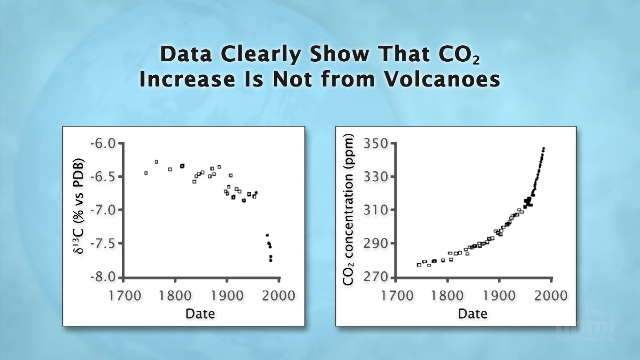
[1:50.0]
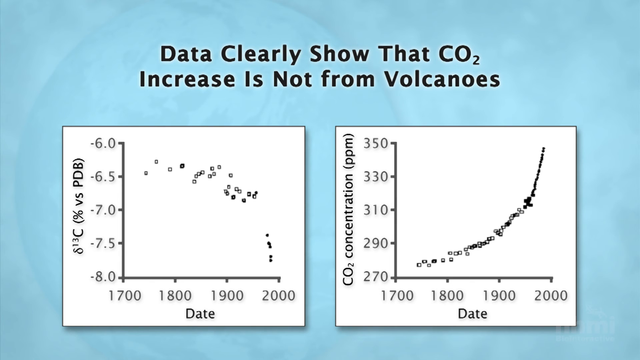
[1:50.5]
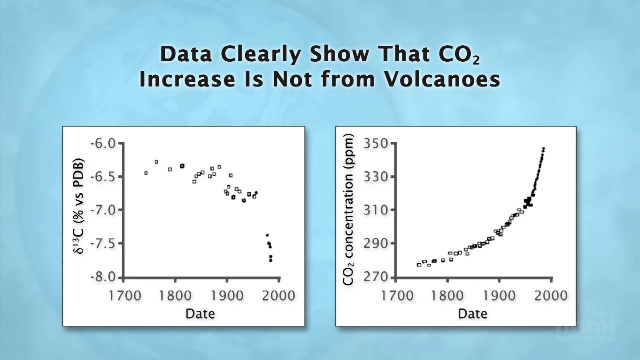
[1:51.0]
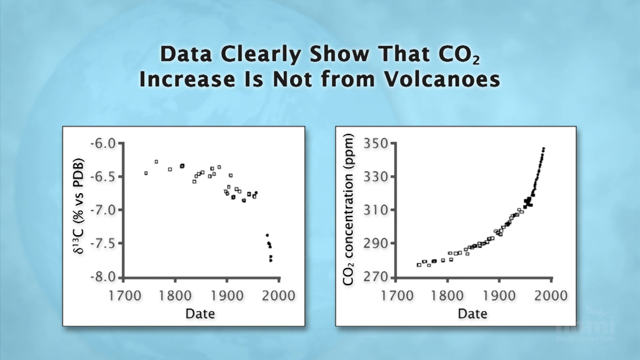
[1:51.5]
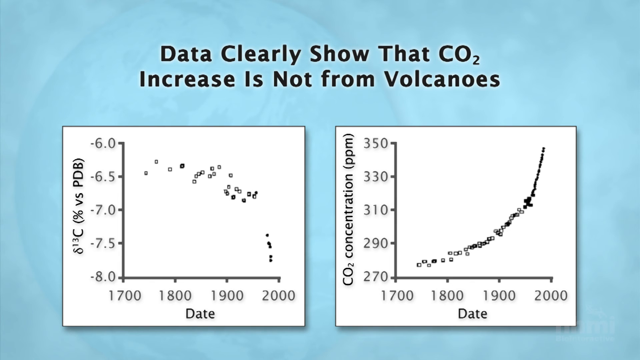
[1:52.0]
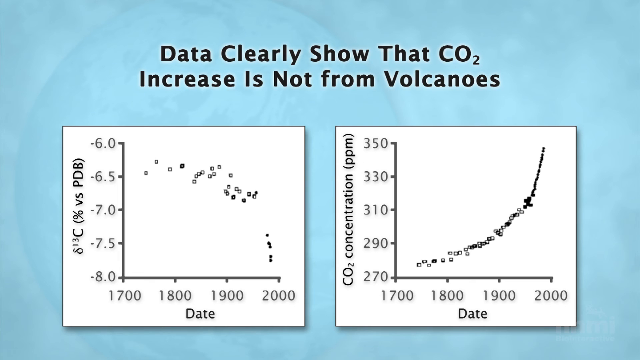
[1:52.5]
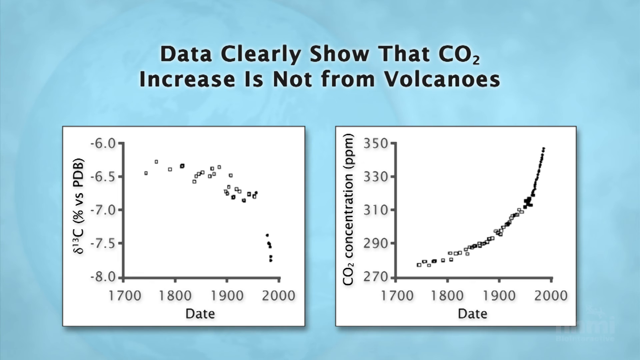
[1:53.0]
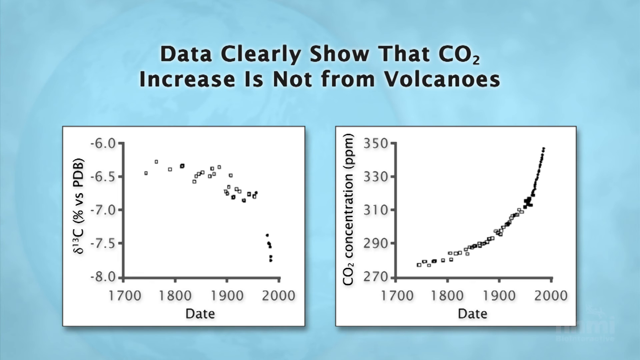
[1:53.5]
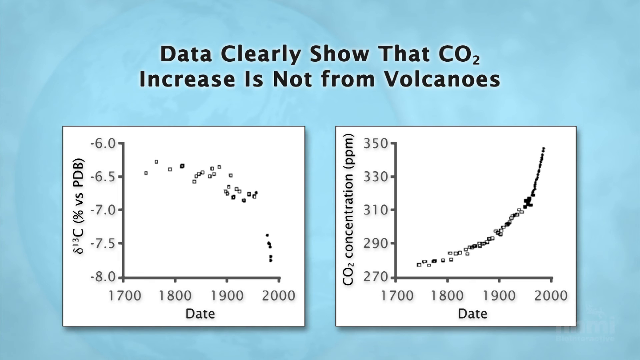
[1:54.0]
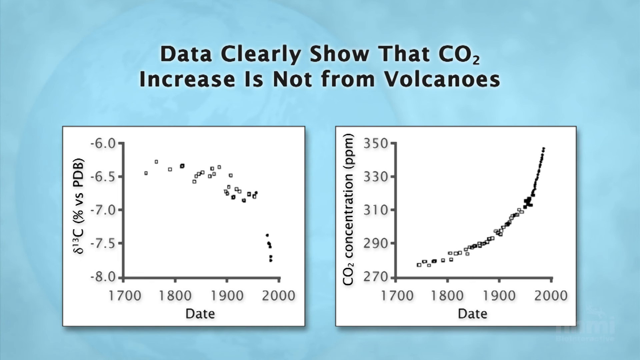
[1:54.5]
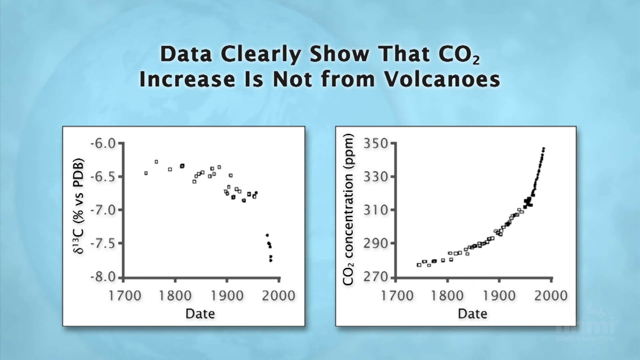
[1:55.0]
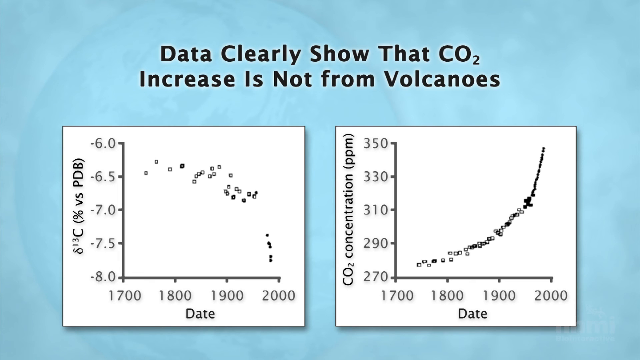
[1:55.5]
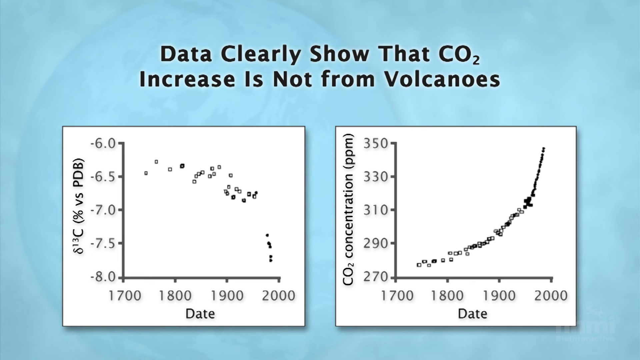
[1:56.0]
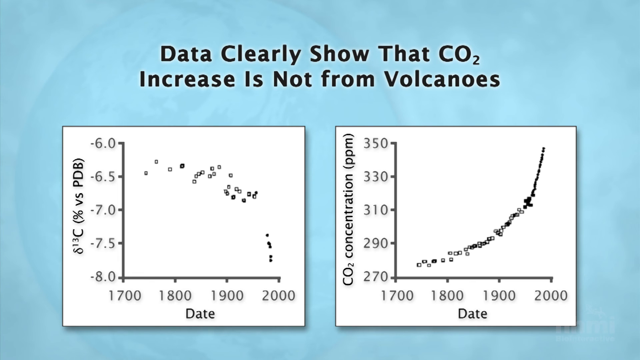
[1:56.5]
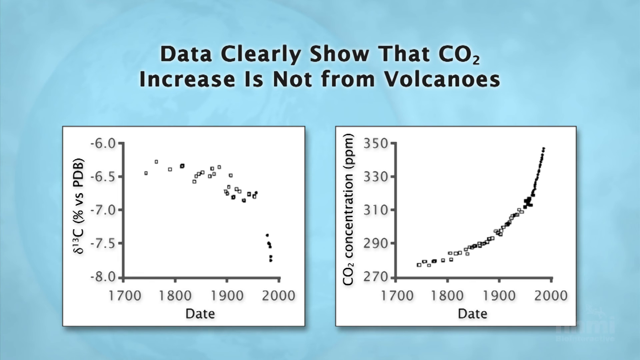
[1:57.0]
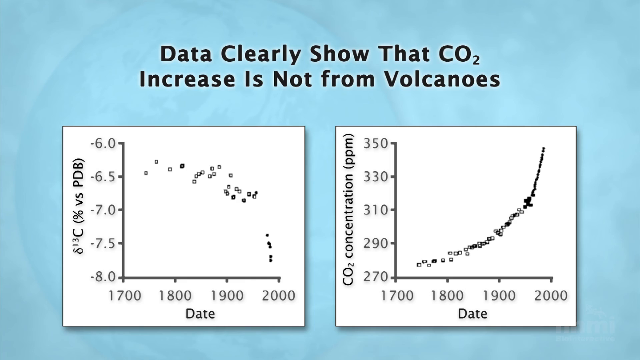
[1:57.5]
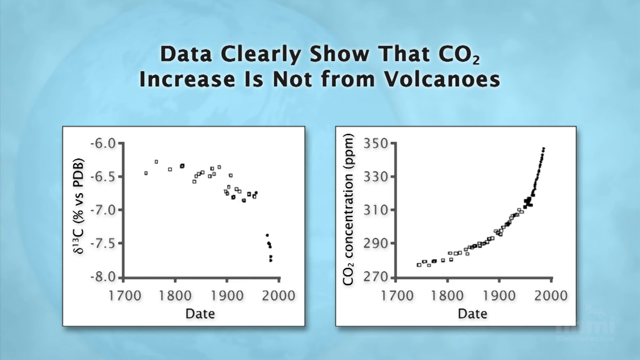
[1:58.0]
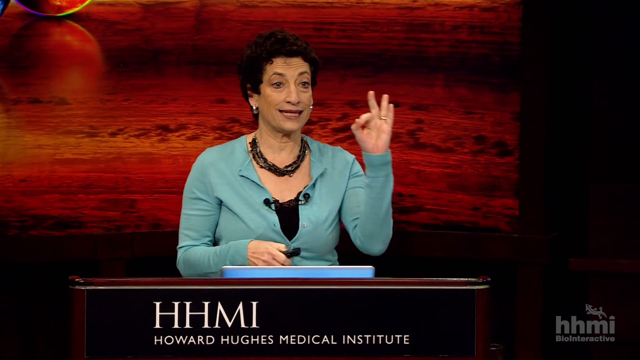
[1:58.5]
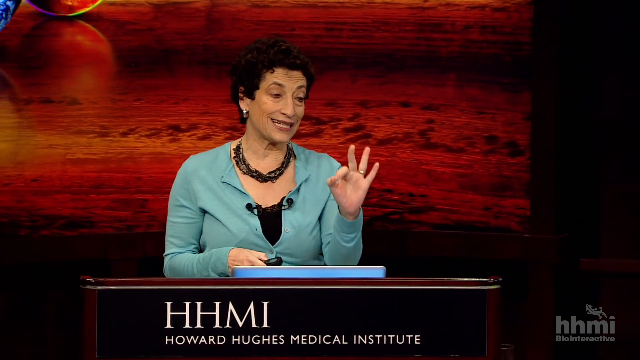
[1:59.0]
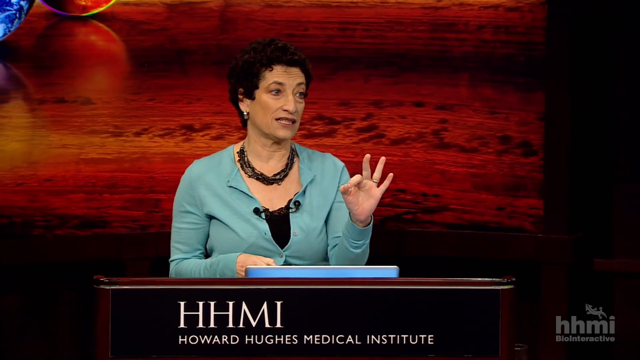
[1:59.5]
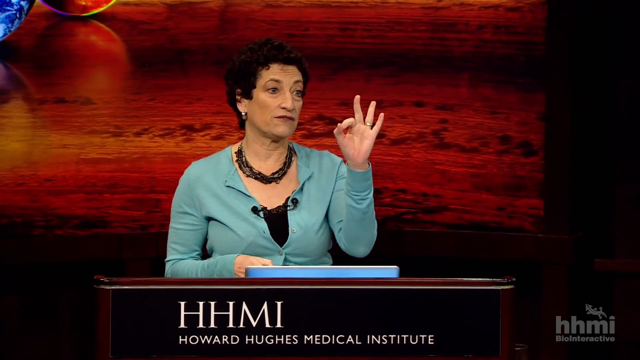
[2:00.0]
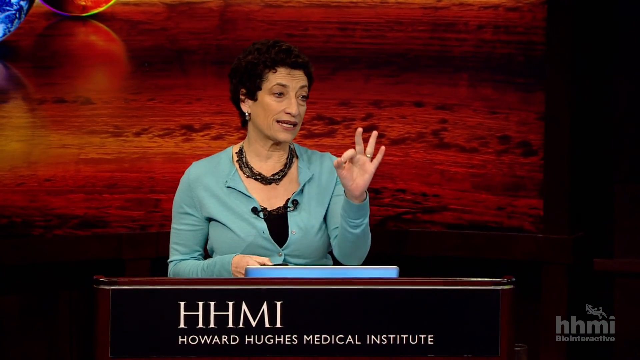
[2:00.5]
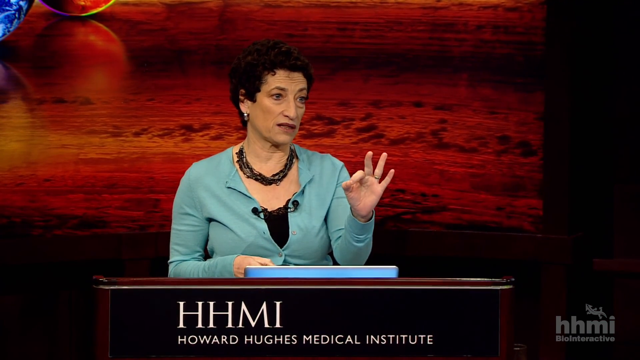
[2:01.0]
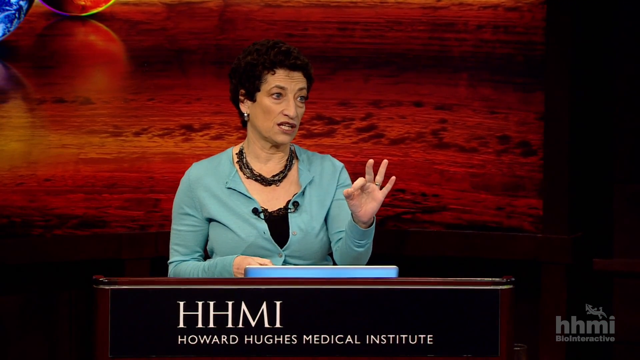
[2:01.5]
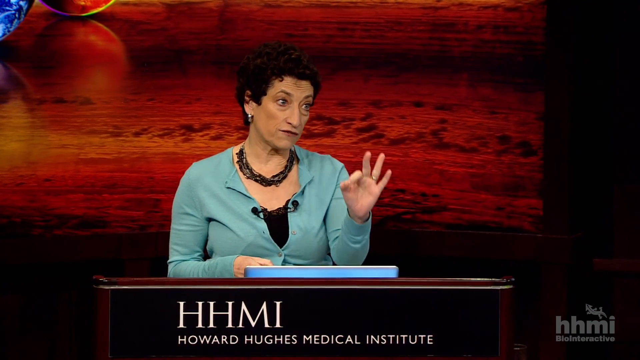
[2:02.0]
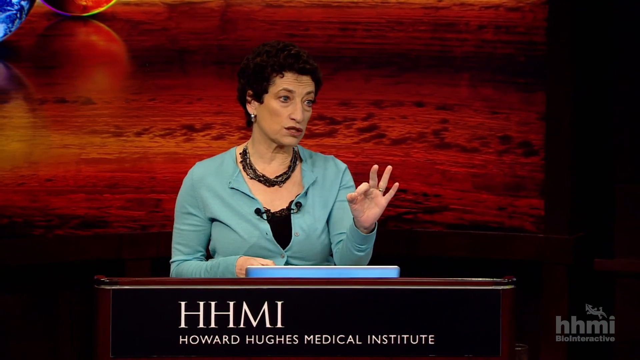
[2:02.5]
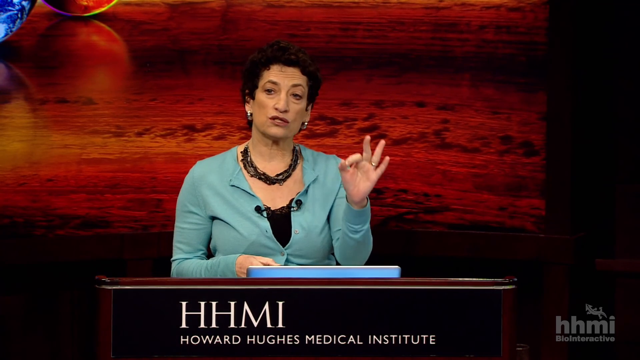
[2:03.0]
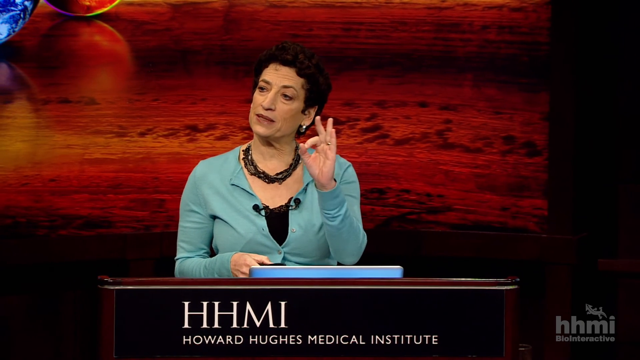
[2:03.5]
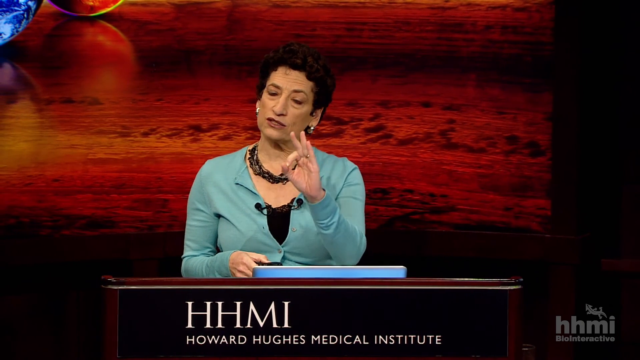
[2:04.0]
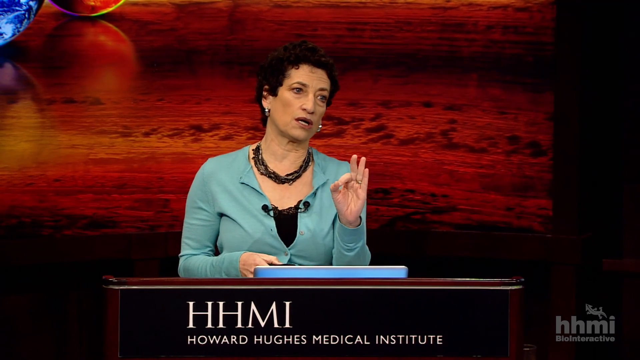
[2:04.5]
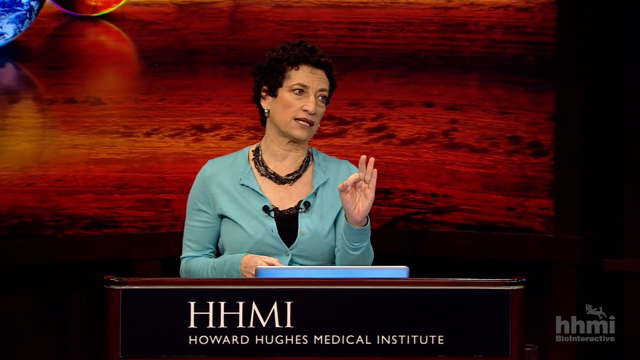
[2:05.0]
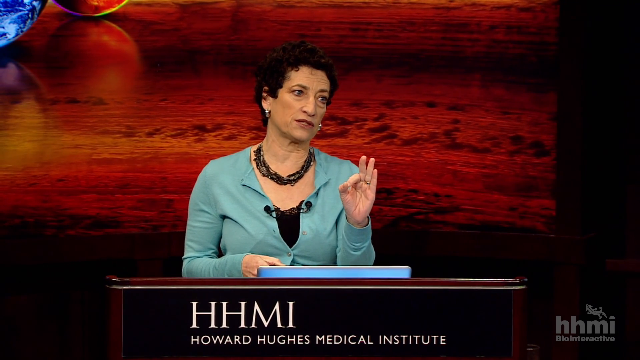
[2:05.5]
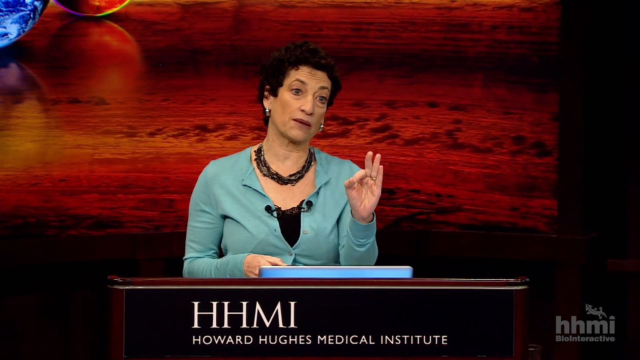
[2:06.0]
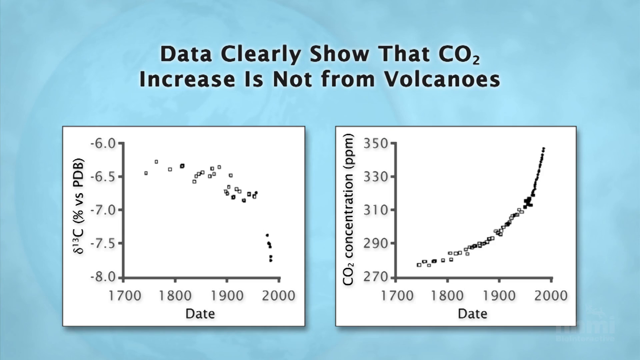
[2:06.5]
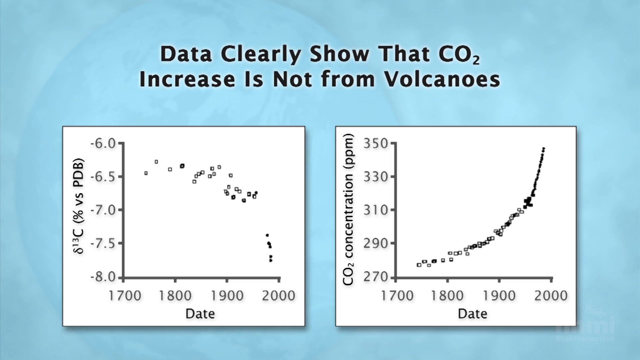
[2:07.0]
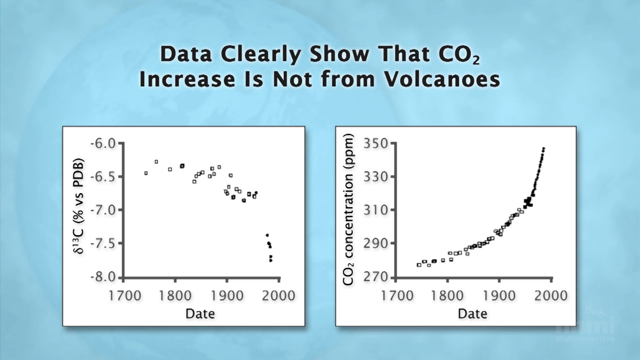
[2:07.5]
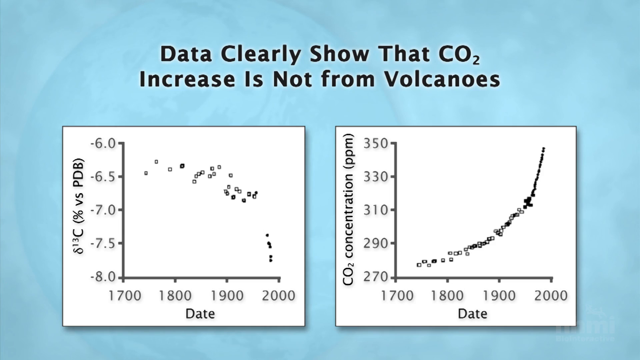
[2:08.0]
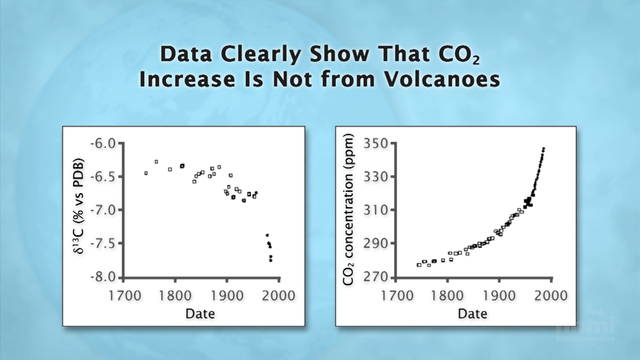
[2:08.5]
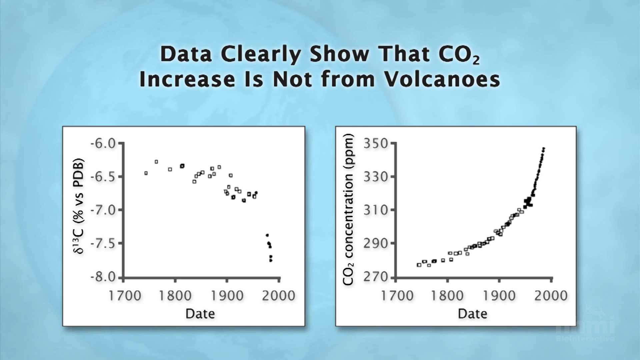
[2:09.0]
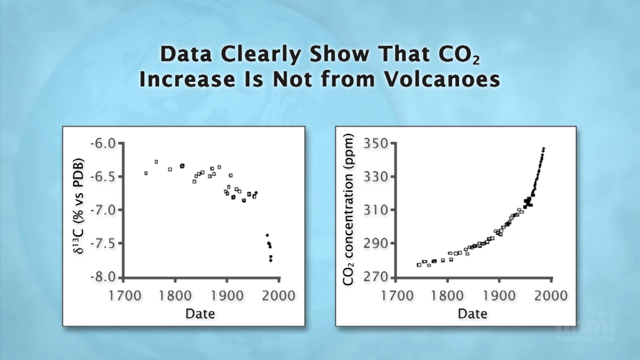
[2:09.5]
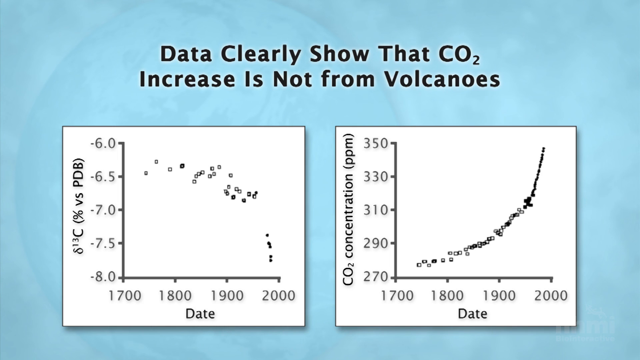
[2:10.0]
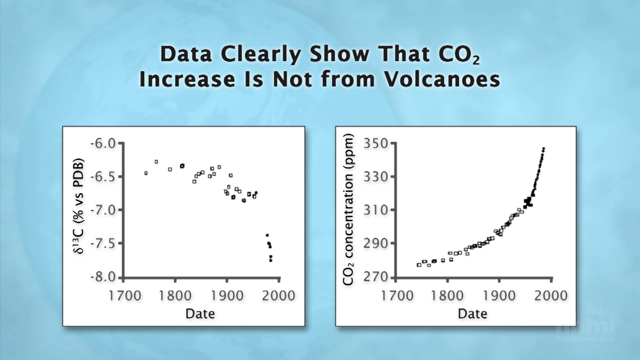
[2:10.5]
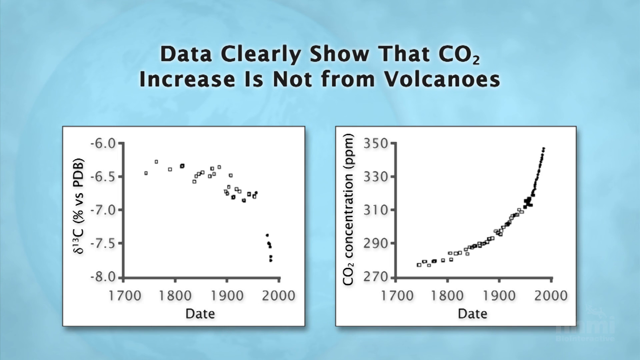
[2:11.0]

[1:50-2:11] The two black-and-white charts remain on a light blue background, with the text "data clearly show that CO2 increase is not from volcanoes." Each chart has different measurements with data on them, apparently meant to show that the CO2 increase is not from volcanoes. The speaker is then shown again: an older woman with short dark hair, wearing a light green shirt and thick, kind of black or dark-colored necklaces, standing in front of a backdrop that looks like it is made of wood, sky and planets. The podium in front of her bears the name of her organization, HHMI, the Howard Hughes Medical Institute. The video then cuts back to the charts showing that the CO2 increase is not from volcanoes.